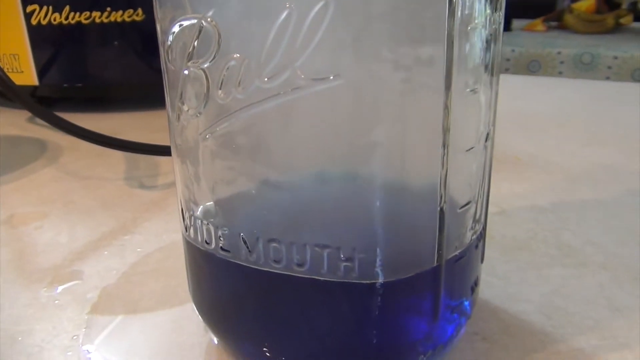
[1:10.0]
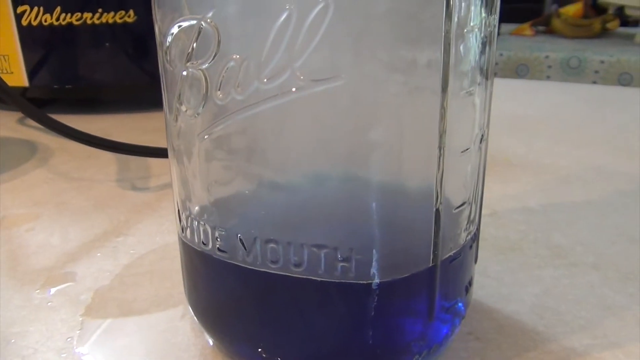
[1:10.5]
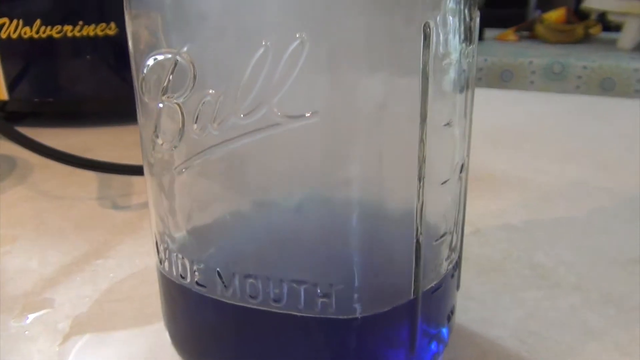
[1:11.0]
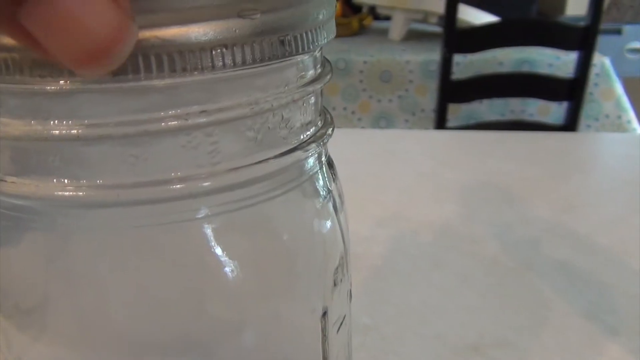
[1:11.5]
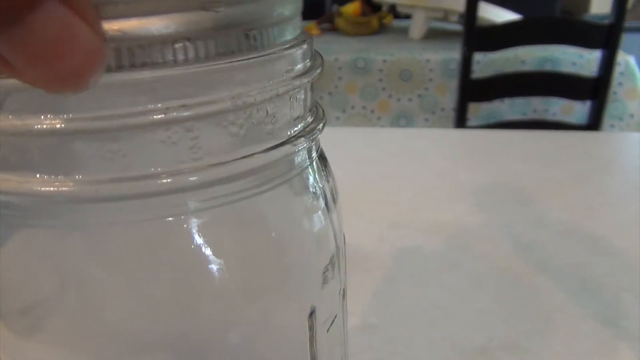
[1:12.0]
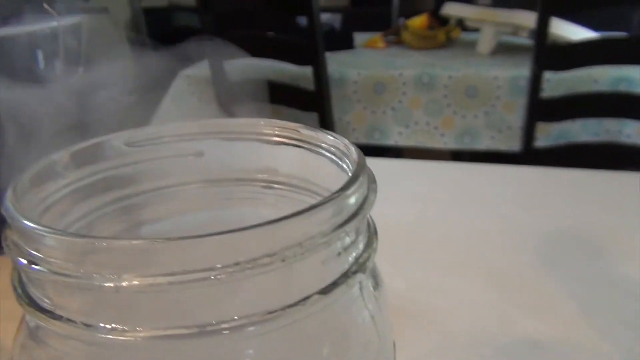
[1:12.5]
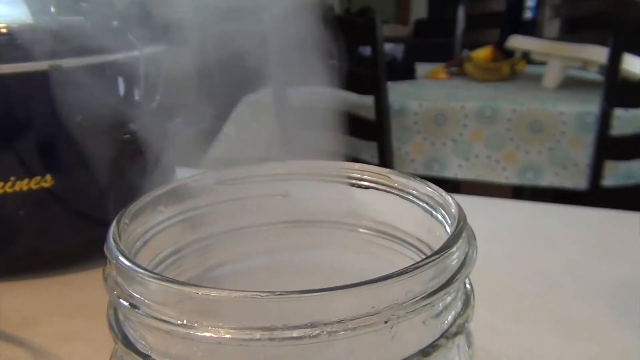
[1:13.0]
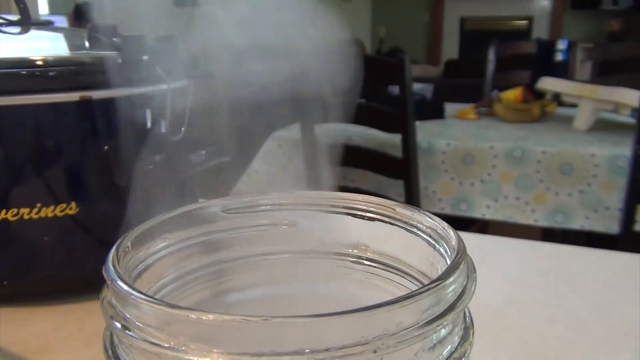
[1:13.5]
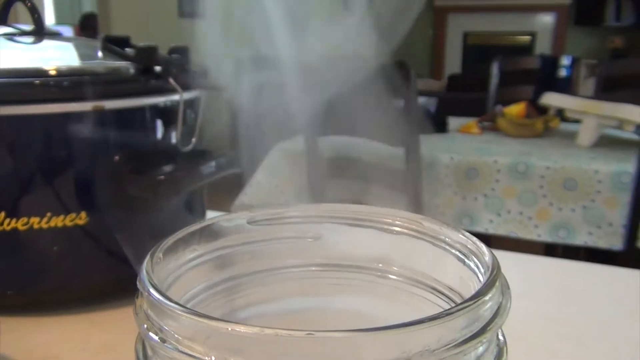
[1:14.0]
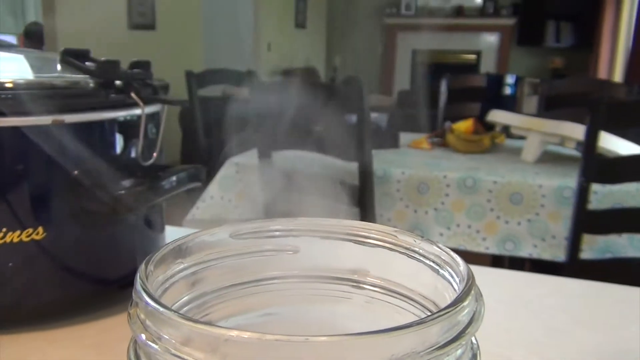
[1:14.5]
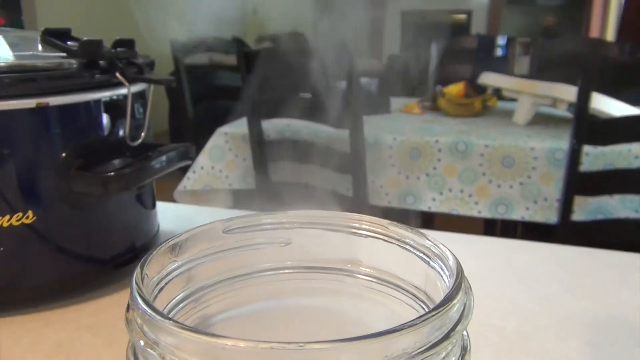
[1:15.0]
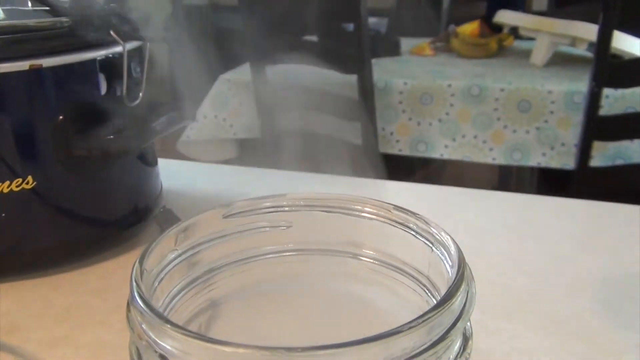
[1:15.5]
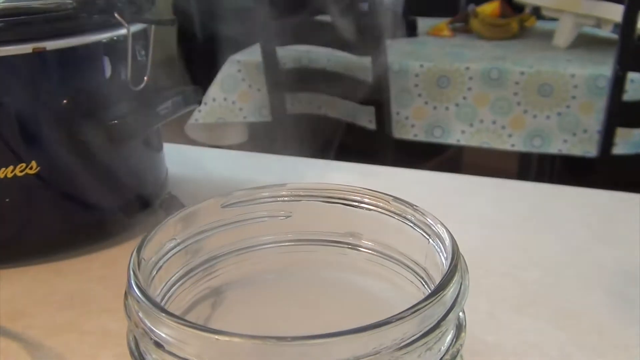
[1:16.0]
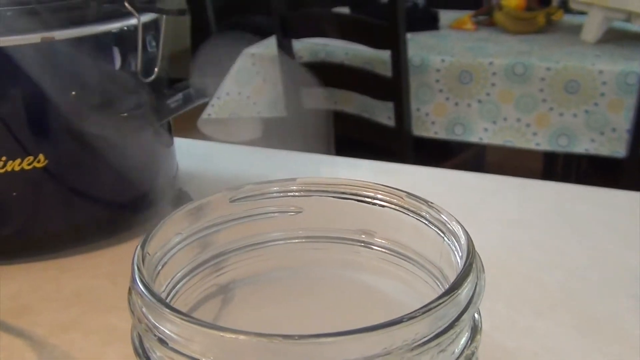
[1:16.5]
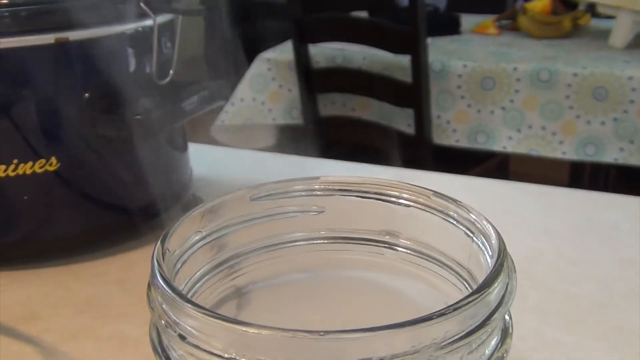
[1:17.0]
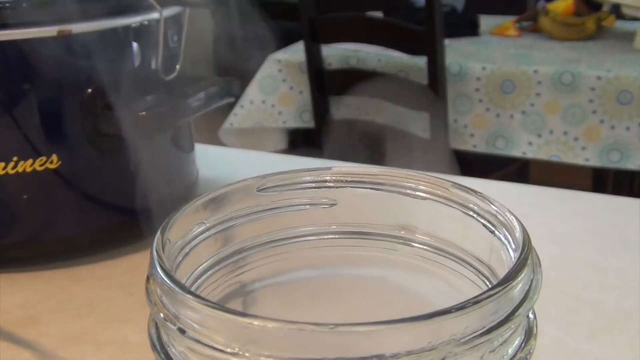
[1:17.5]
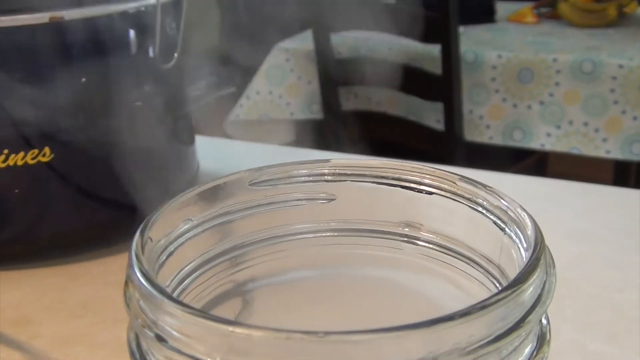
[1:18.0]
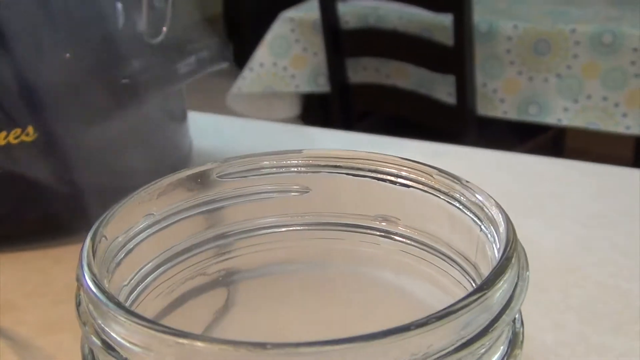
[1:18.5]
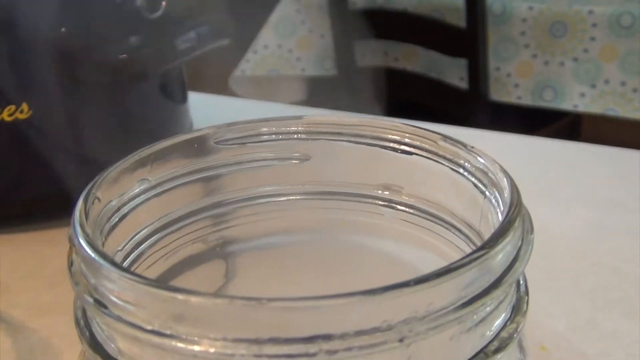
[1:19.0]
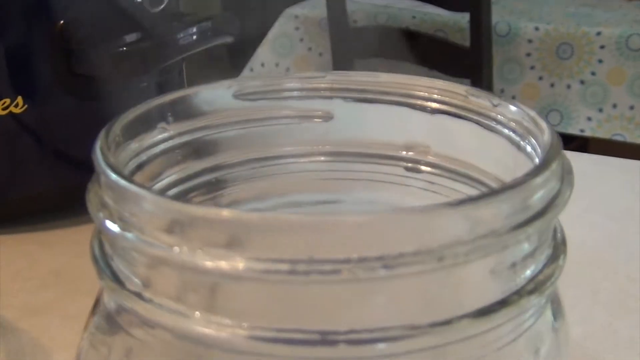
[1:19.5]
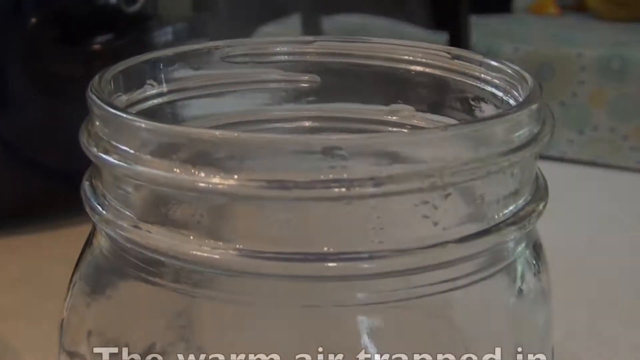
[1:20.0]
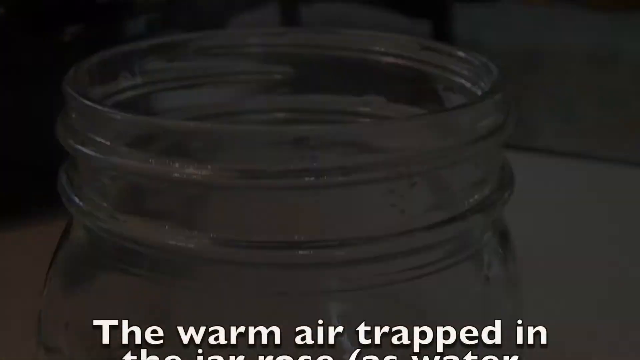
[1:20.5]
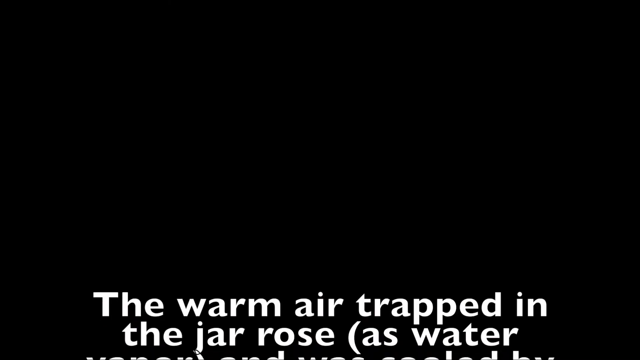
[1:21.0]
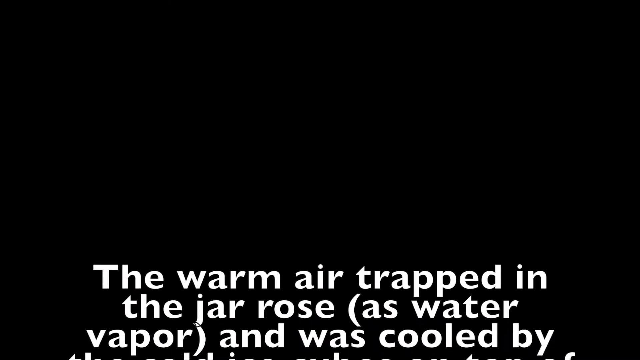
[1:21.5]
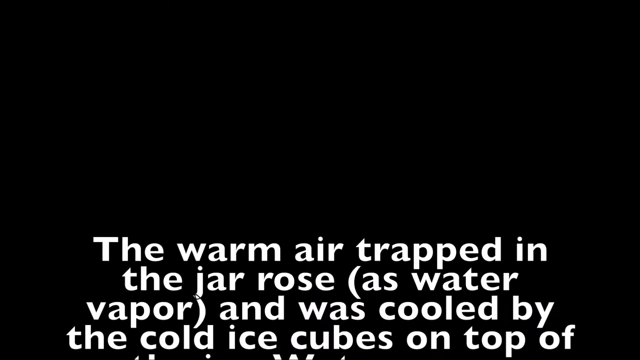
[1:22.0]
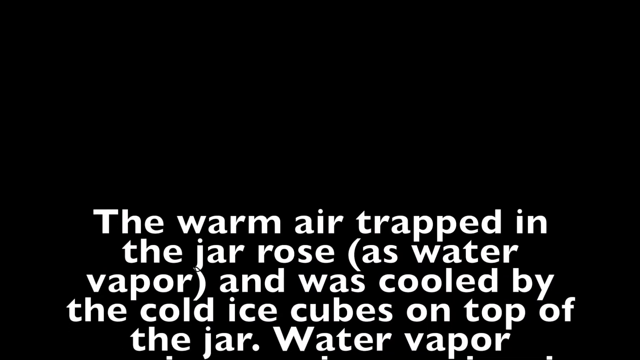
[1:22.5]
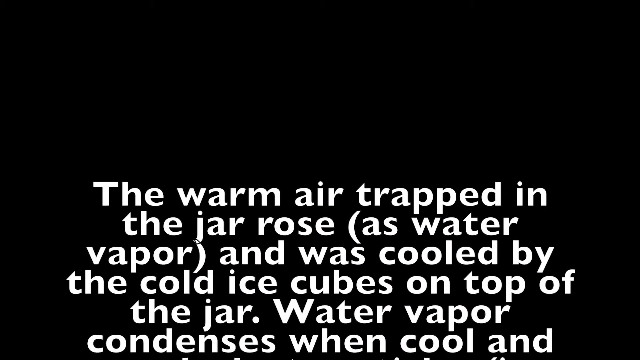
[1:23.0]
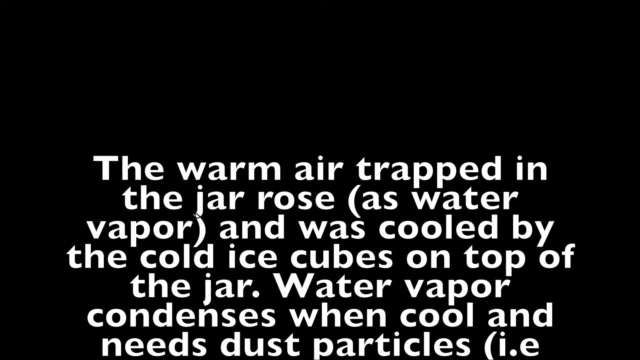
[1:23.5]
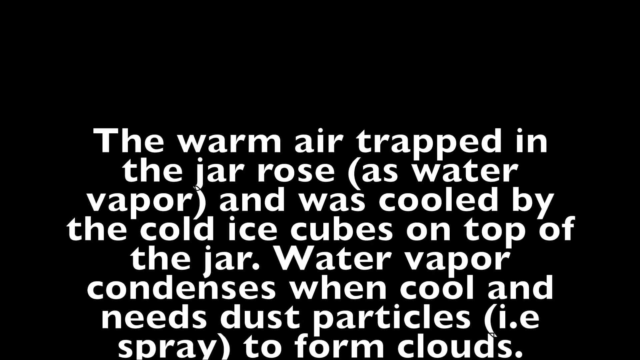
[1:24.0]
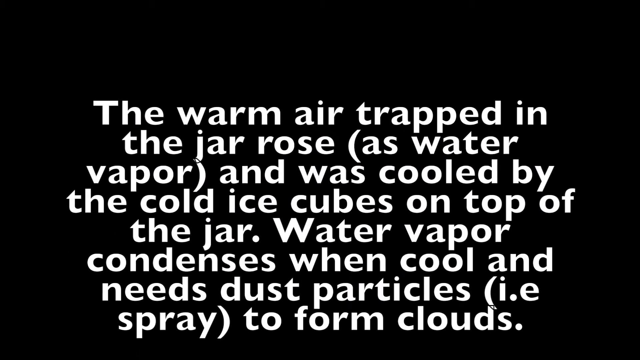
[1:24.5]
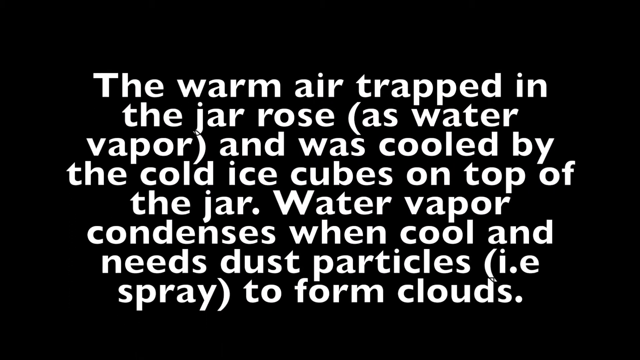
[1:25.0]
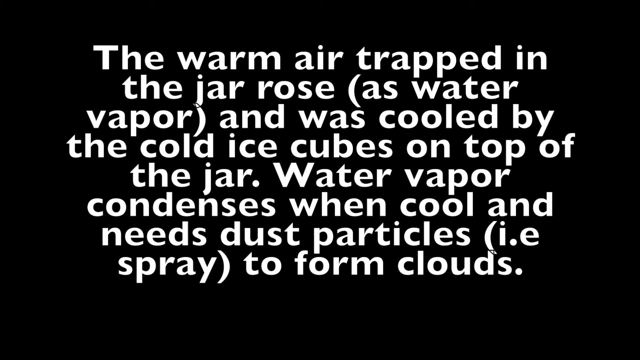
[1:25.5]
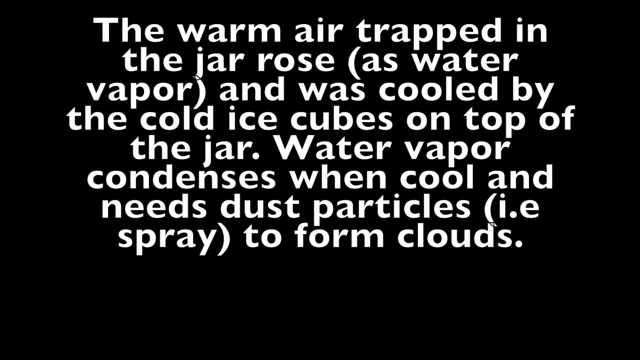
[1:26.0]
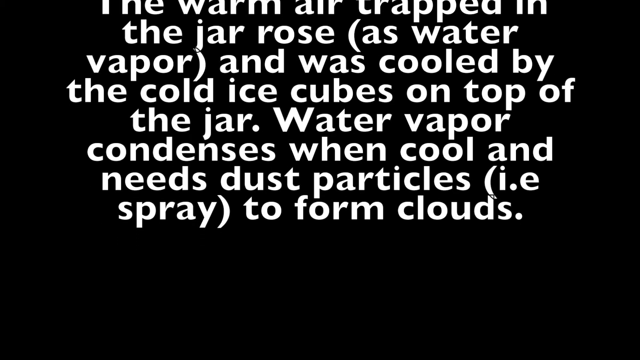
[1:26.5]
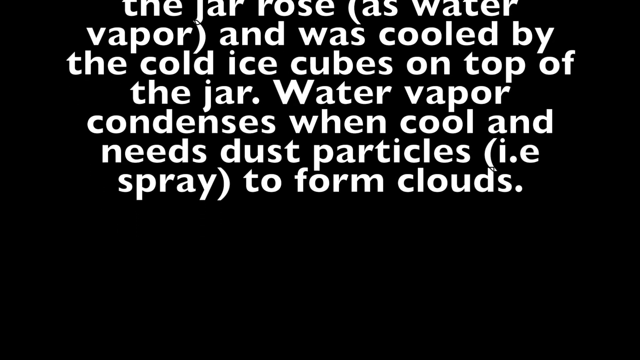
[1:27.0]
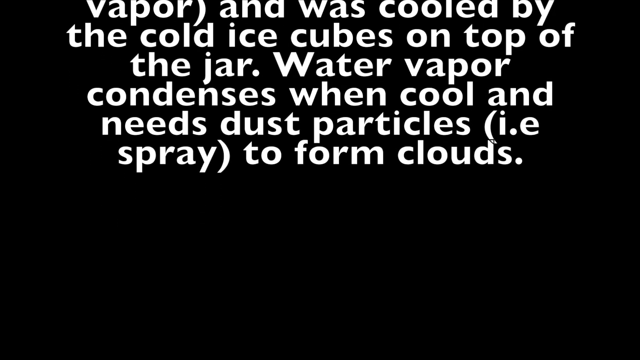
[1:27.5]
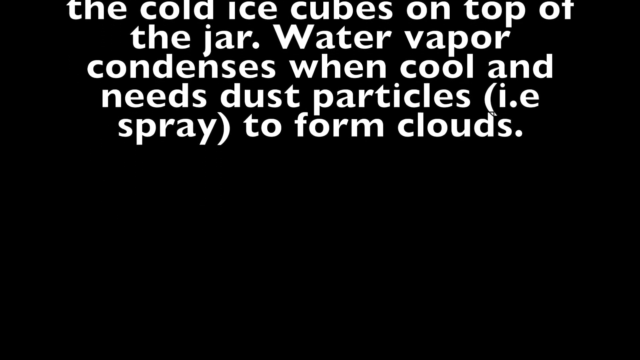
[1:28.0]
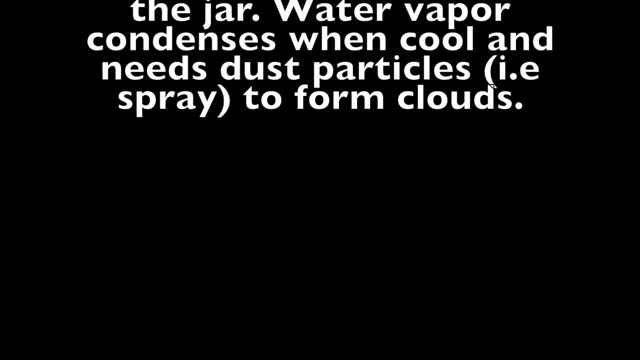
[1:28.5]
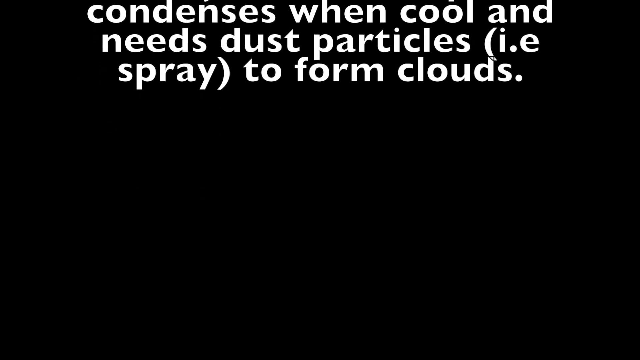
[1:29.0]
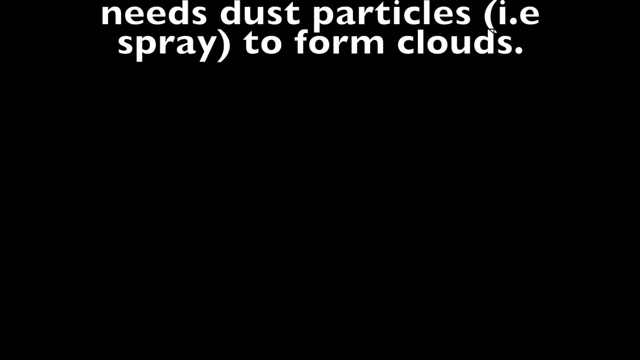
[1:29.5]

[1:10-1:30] Apparently the same jar now has blue liquid at the bottom, which was not there before. The girl takes the lid off again, and this time a much thicker mist, or water vapor, comes out of the jar; the camera focuses on it and zooms in for a few seconds. The scene then turns black and white text appears explaining the experiment: "the warm air trapped in the jar rose as water vapor and was cooled by the cold ice cubes on top of the jar. Water vapor condenses when cool and needs dust particles i.e. spray to form clouds."